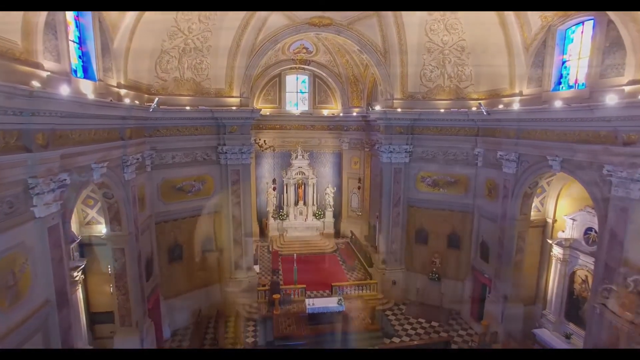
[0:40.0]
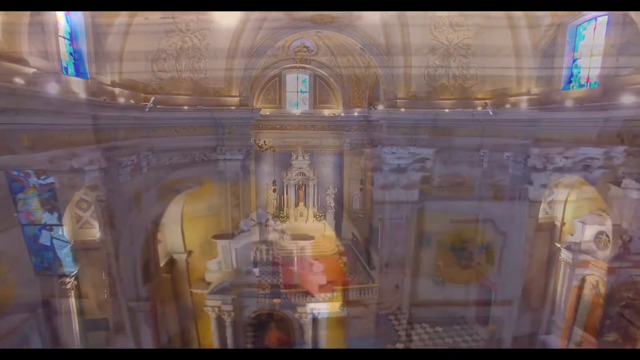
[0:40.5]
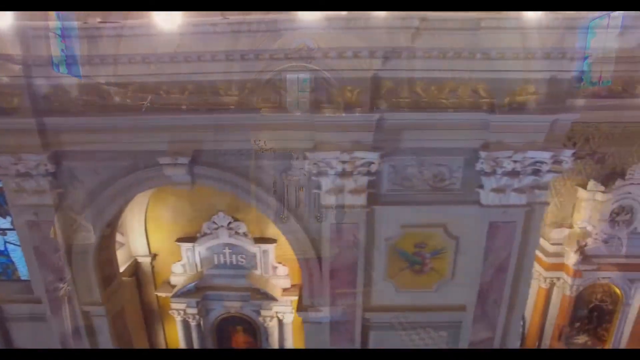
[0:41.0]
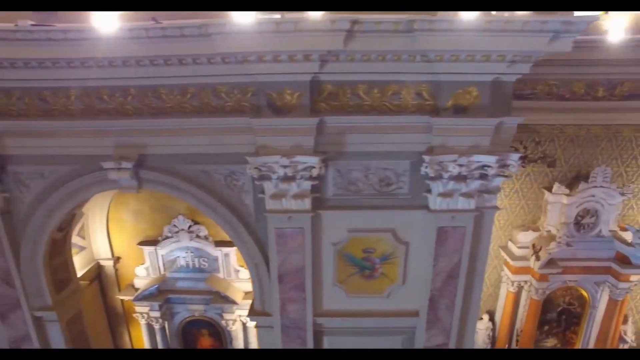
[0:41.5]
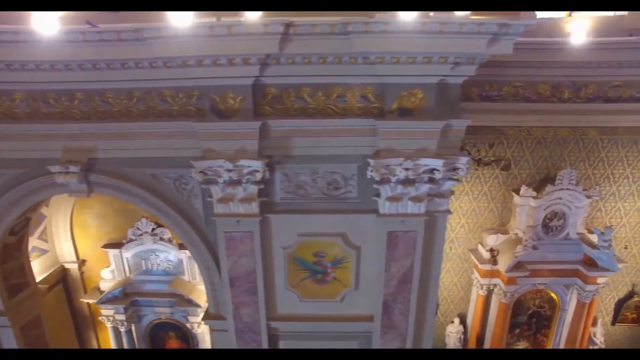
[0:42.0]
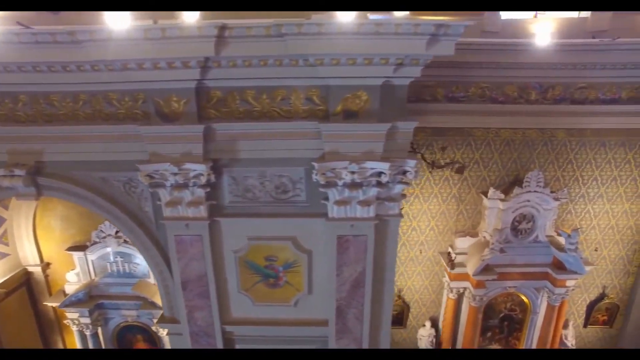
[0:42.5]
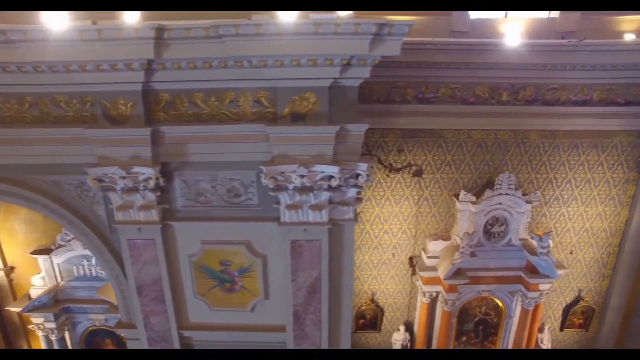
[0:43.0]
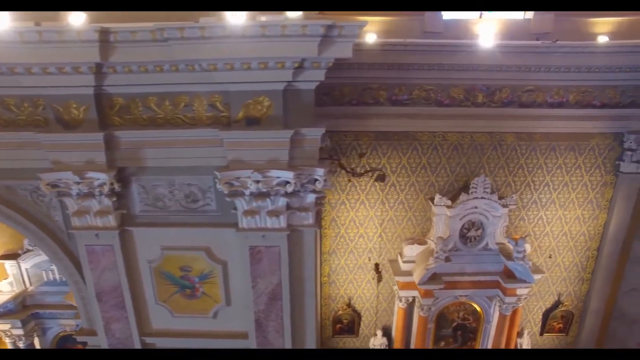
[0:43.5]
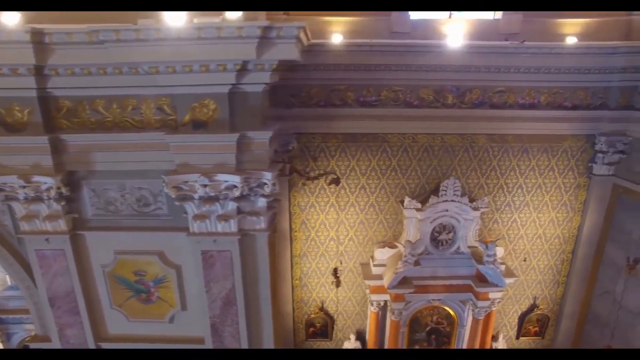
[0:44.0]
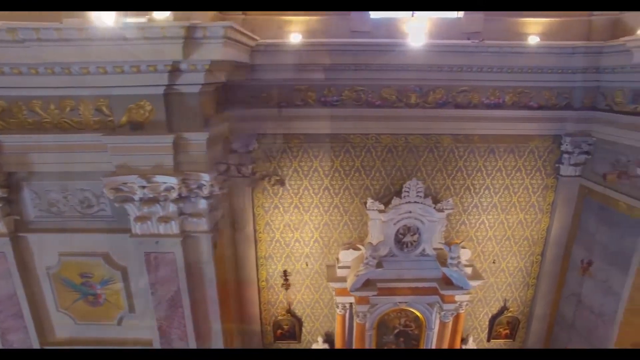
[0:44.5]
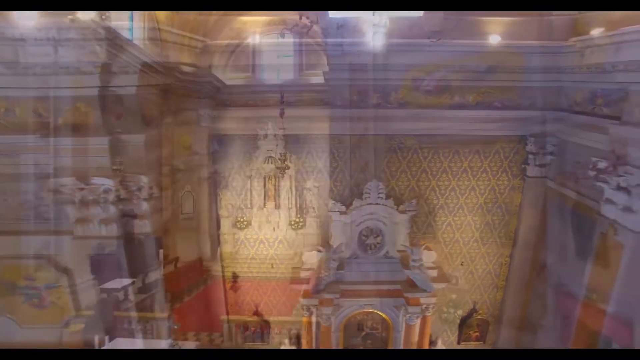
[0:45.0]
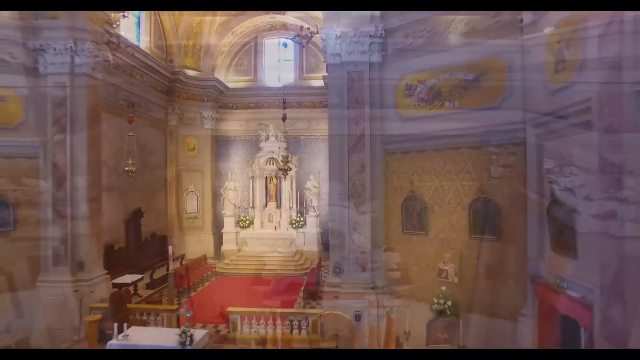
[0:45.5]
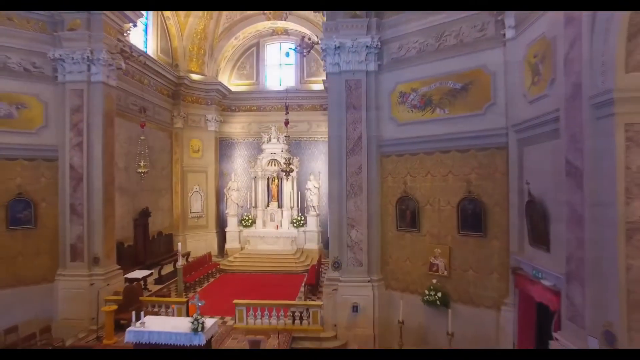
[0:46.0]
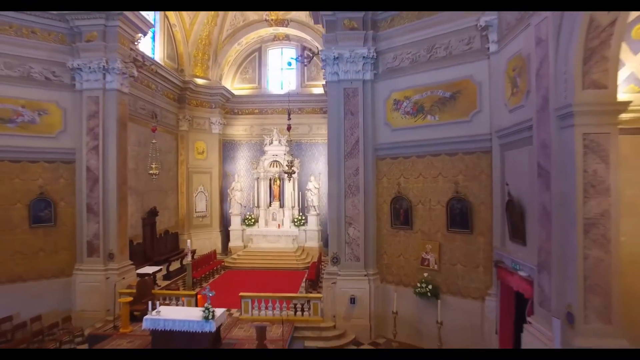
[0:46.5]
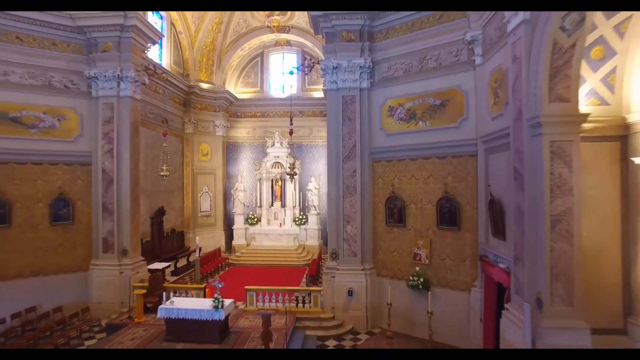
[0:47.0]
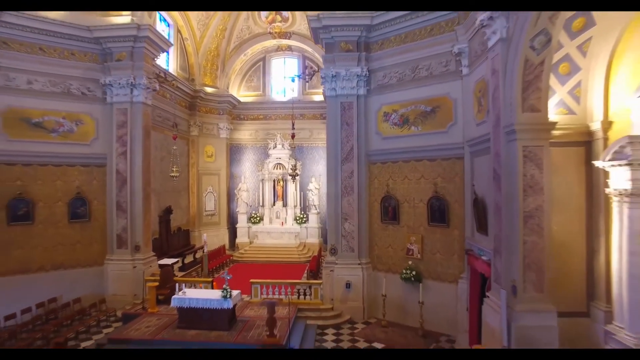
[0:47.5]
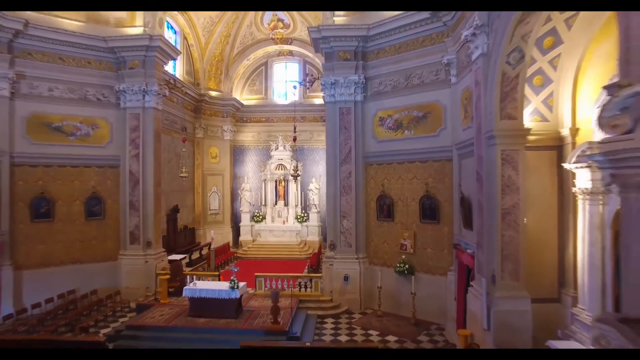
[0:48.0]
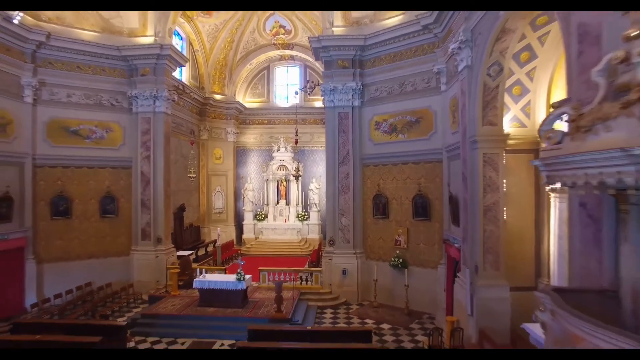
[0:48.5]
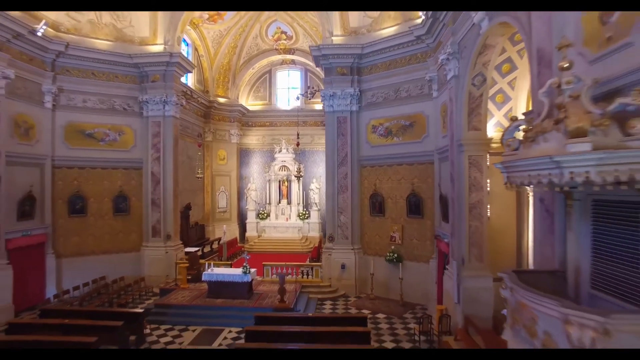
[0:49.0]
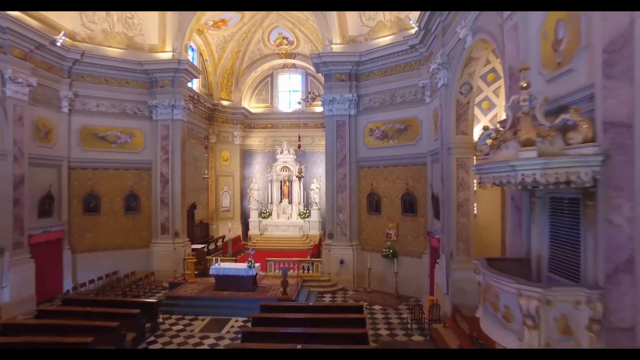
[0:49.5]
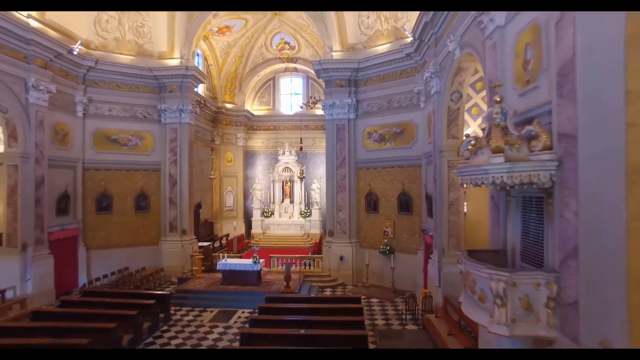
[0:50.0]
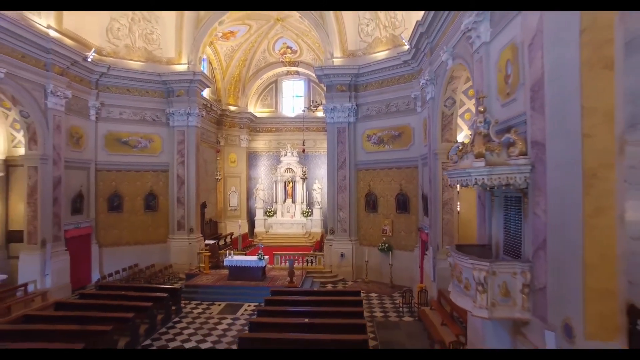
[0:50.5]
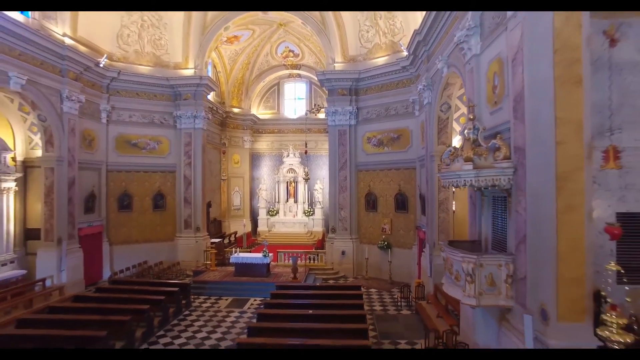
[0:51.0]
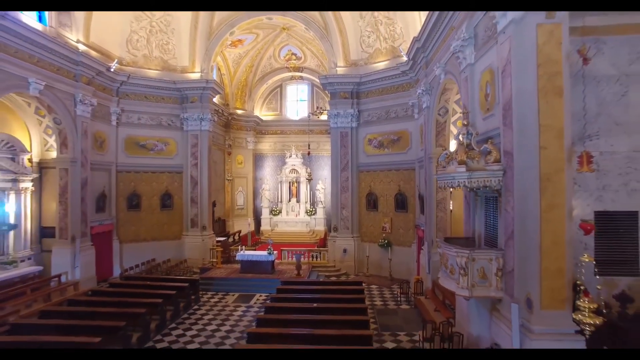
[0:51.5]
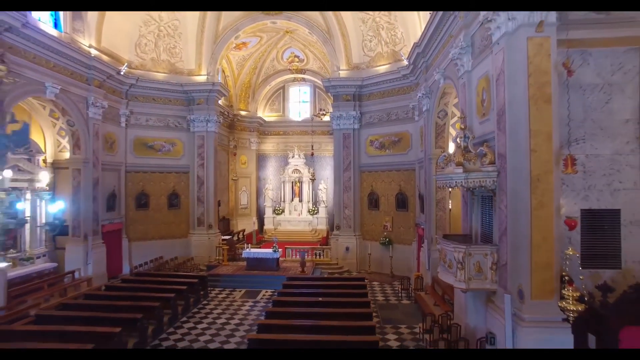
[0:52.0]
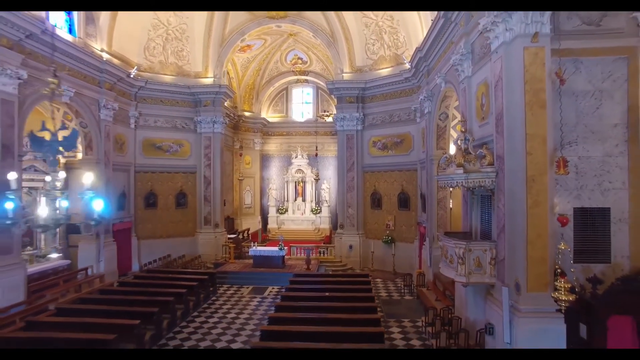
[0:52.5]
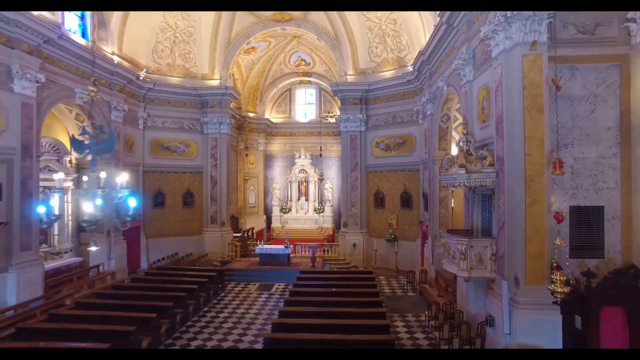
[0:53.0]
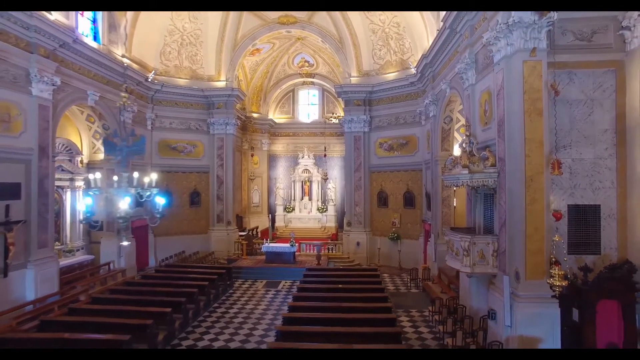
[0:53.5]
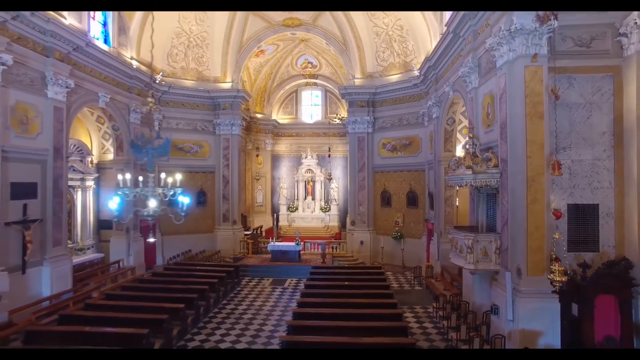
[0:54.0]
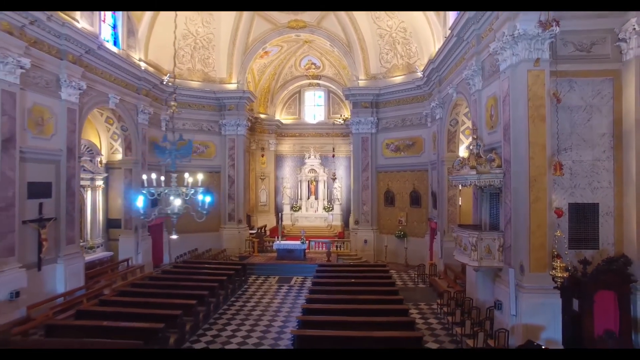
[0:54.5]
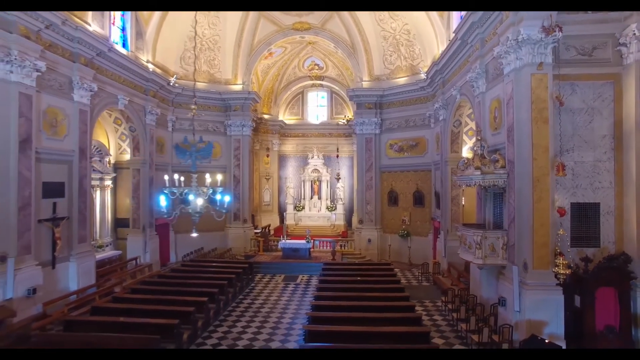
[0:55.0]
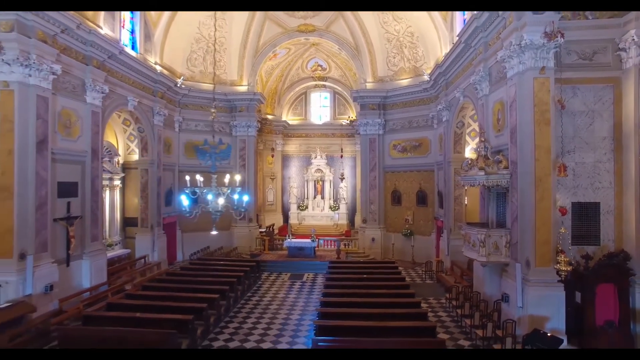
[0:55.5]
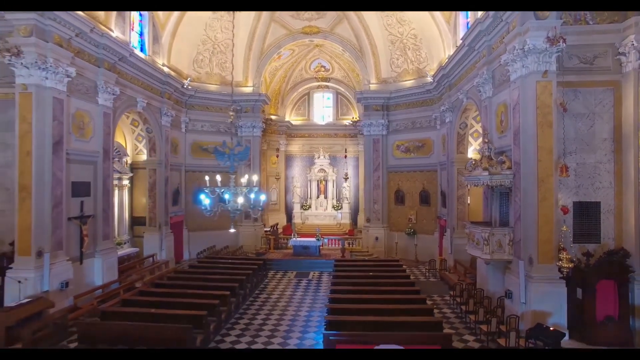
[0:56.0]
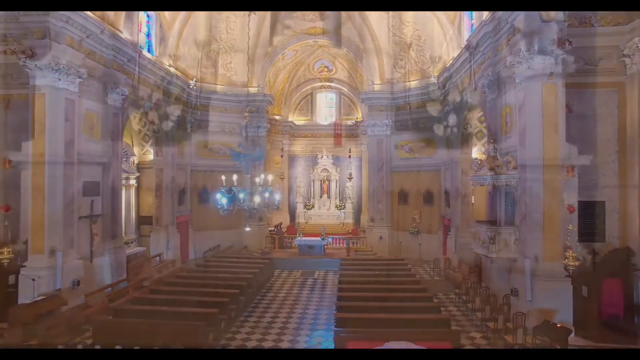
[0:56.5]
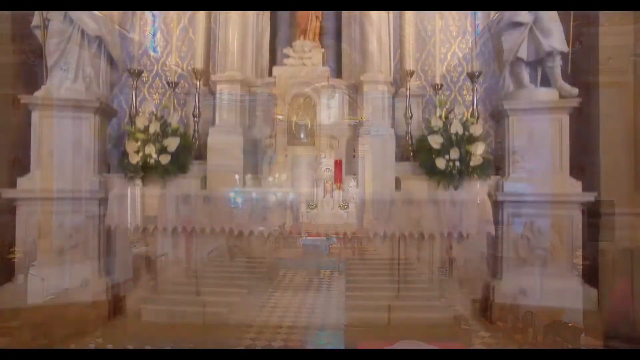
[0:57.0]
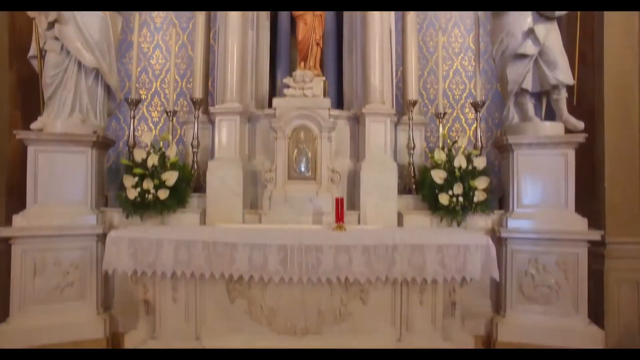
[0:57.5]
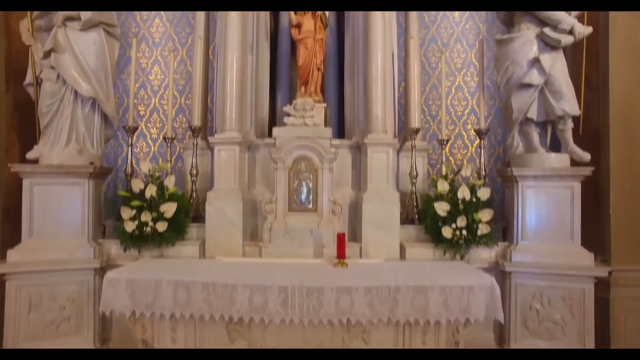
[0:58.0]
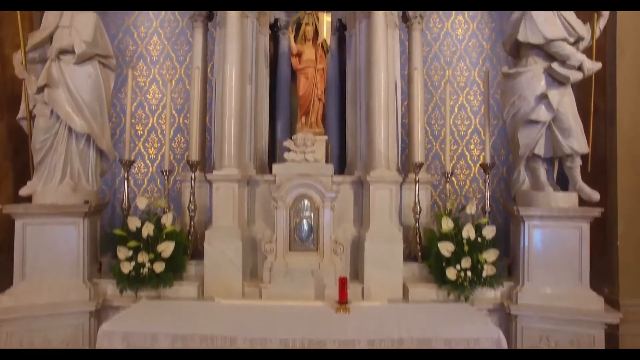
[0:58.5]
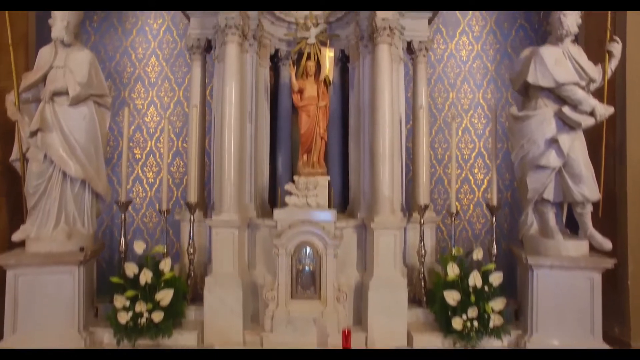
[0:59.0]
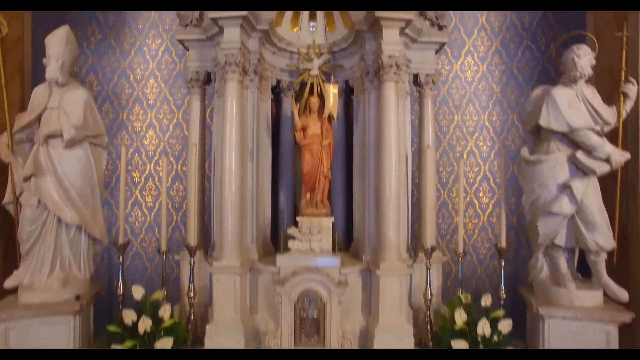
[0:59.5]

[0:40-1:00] From an aerial view looking down the nave toward the altar, the camera pans around the ceiling. Rounded lights cast light on the tops of the arches, showing the detailing of the arches and columns and the design on their tops: an inlaid, decorated grey plaster strip with gold painting on it and some ornate stonework. The camera pans around to show side chapels on either side, then pans back out toward the altarpiece. The roof is intricately vaulted, and some stained glass windows let in light at the top. The camera zooms in on the altarpiece, which holds a statue of the Virgin Mary.